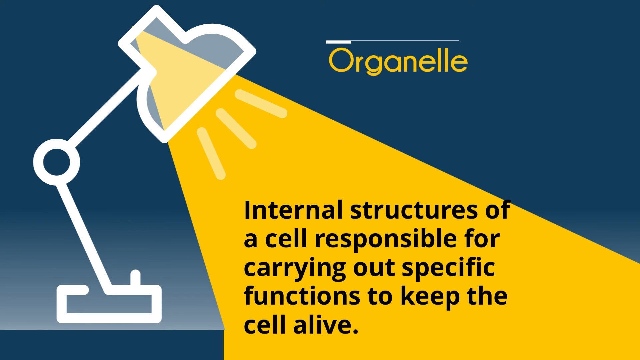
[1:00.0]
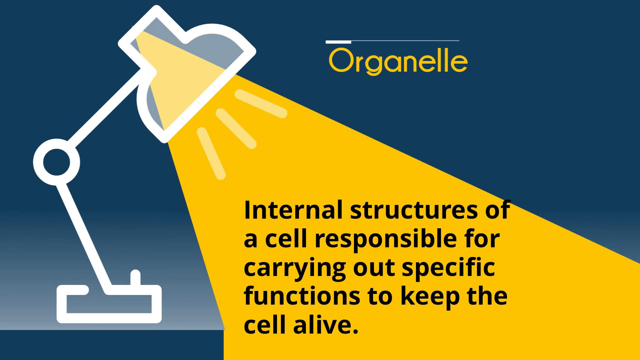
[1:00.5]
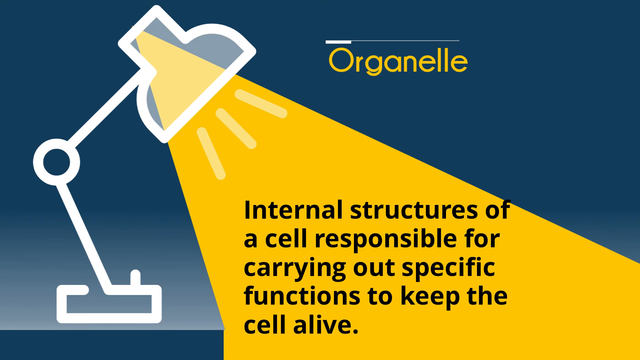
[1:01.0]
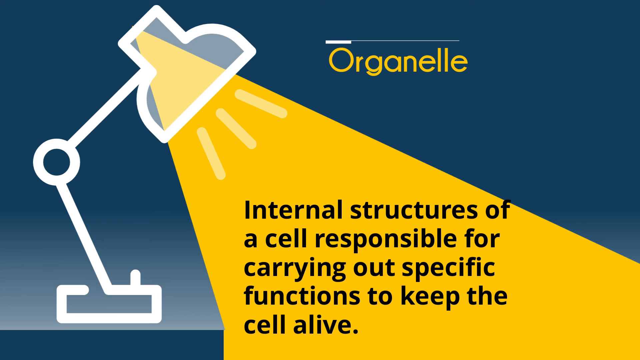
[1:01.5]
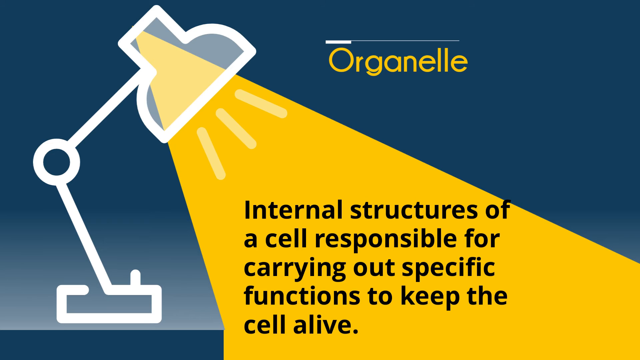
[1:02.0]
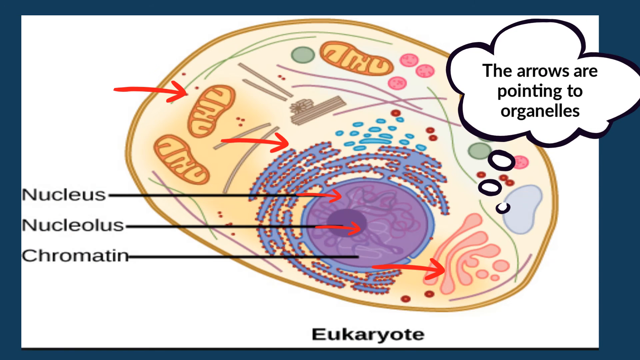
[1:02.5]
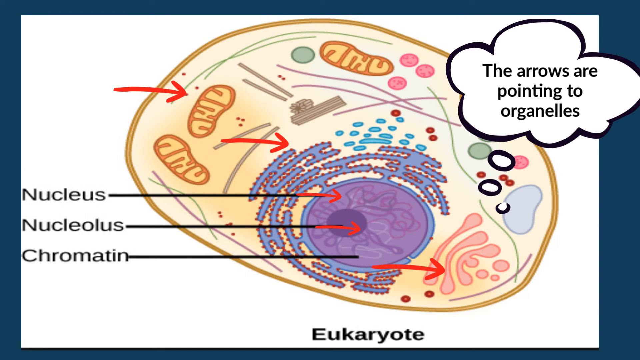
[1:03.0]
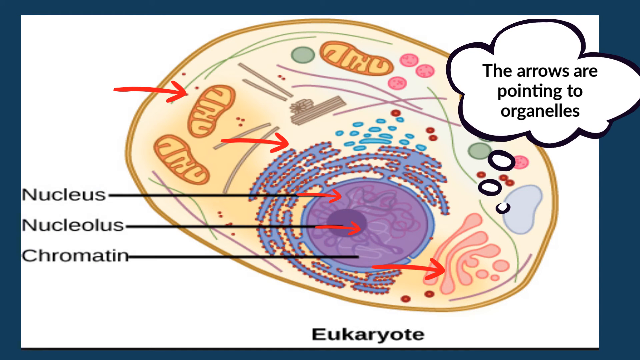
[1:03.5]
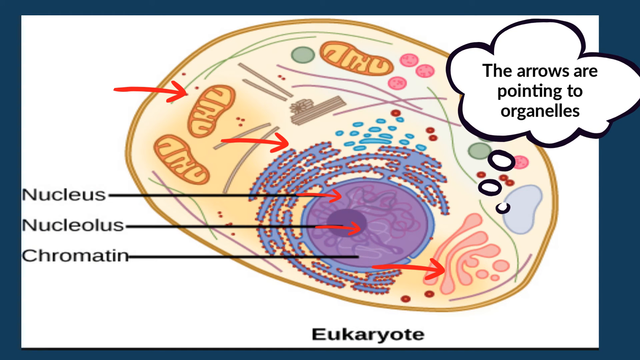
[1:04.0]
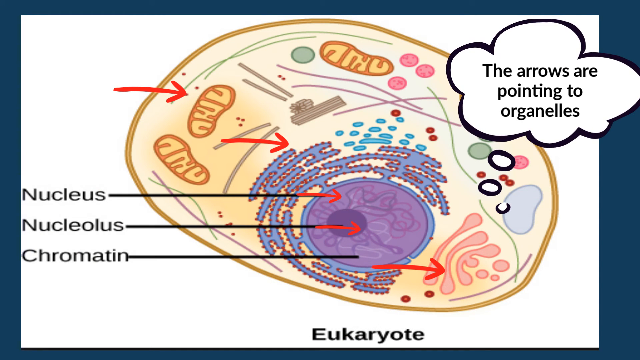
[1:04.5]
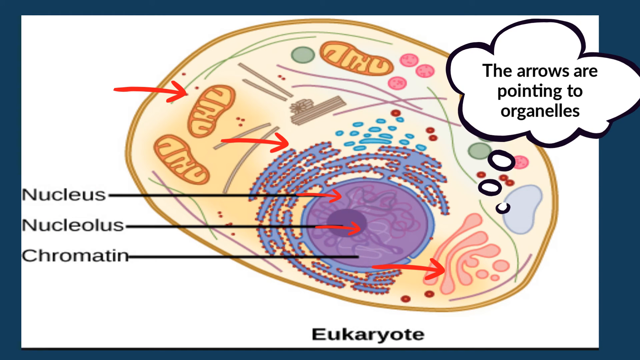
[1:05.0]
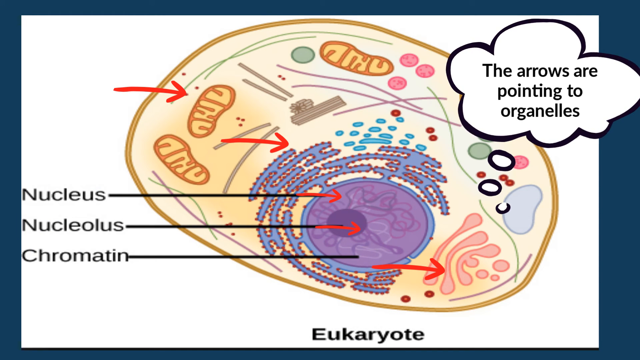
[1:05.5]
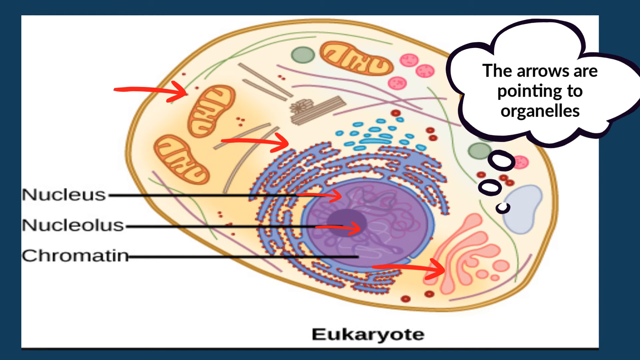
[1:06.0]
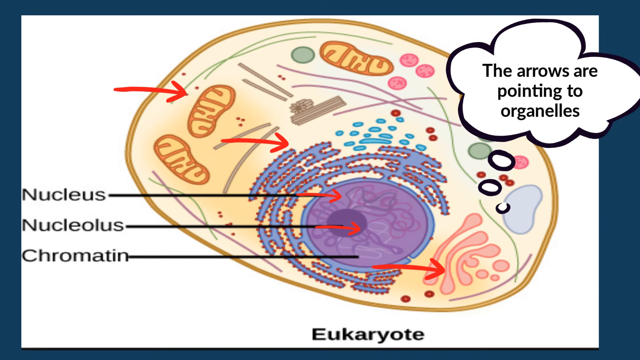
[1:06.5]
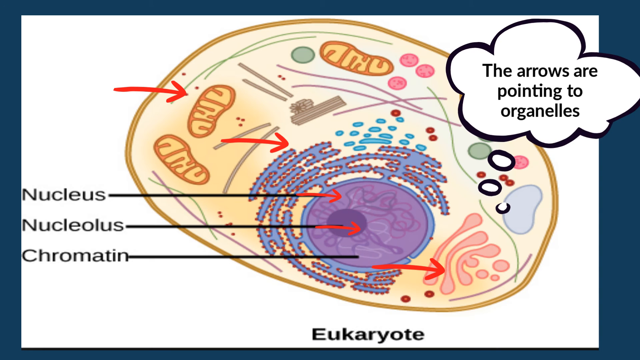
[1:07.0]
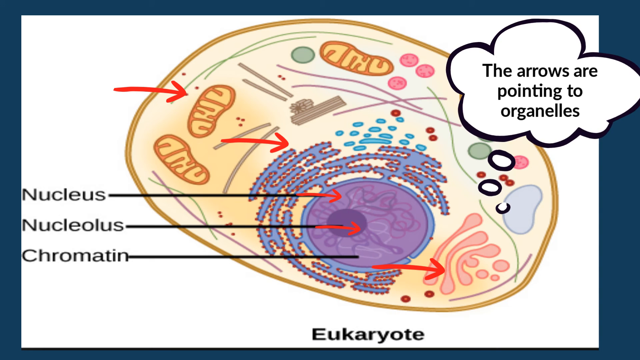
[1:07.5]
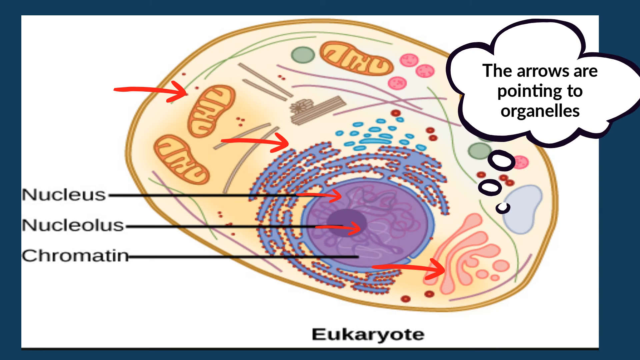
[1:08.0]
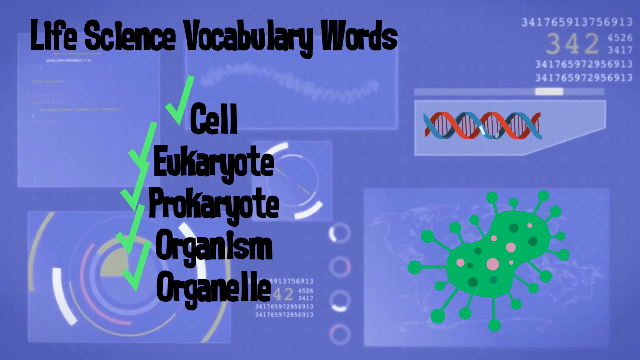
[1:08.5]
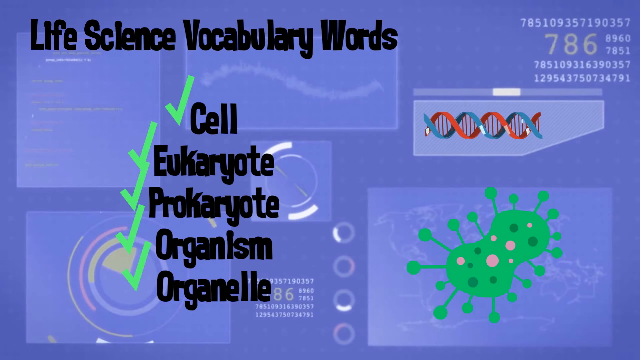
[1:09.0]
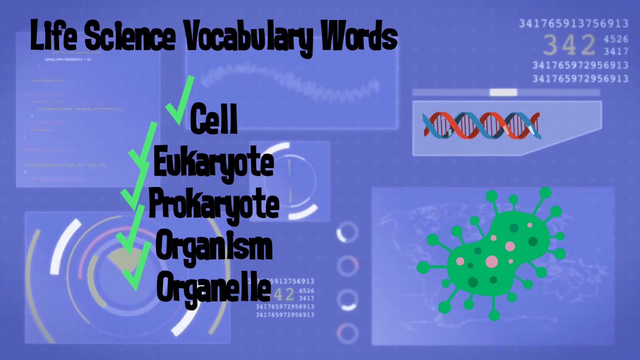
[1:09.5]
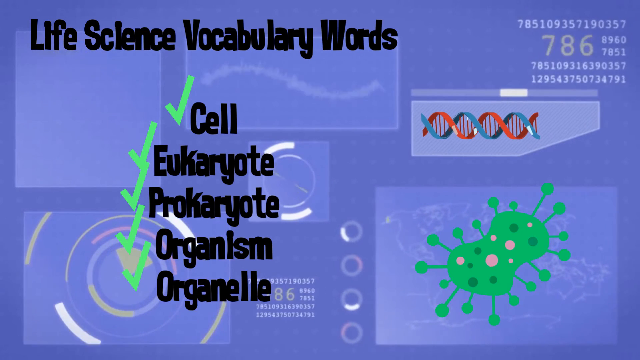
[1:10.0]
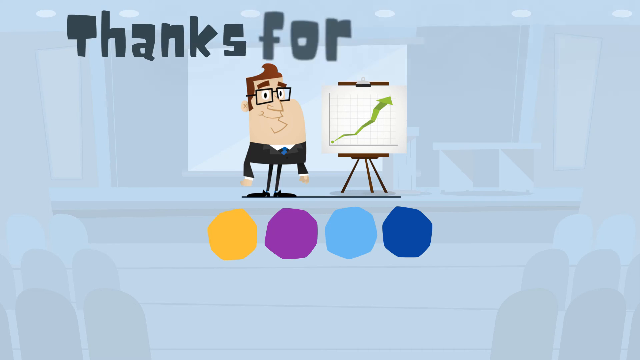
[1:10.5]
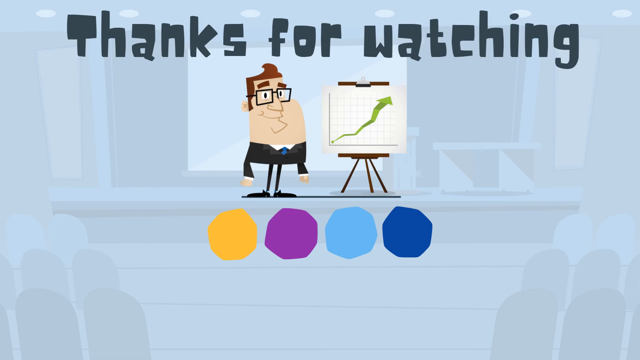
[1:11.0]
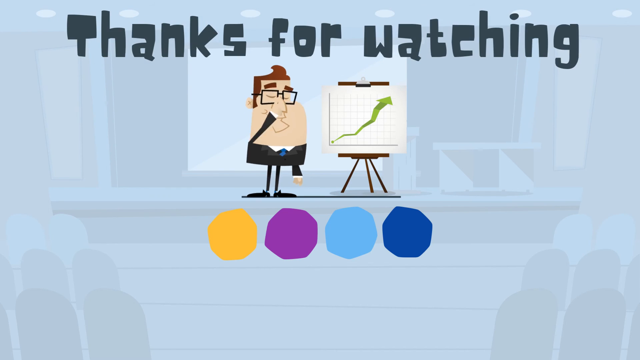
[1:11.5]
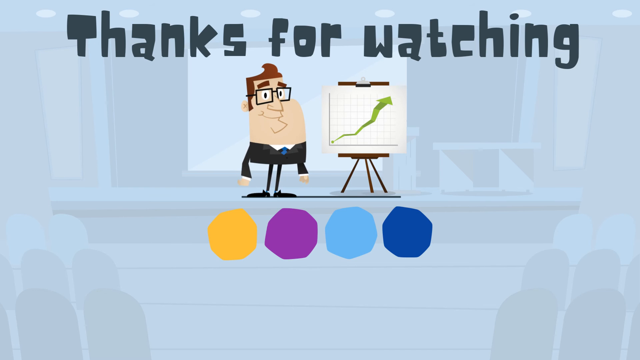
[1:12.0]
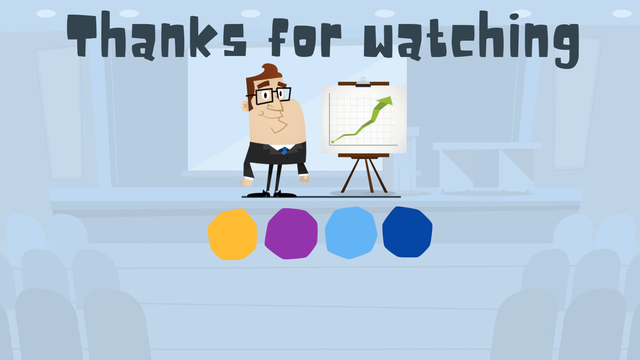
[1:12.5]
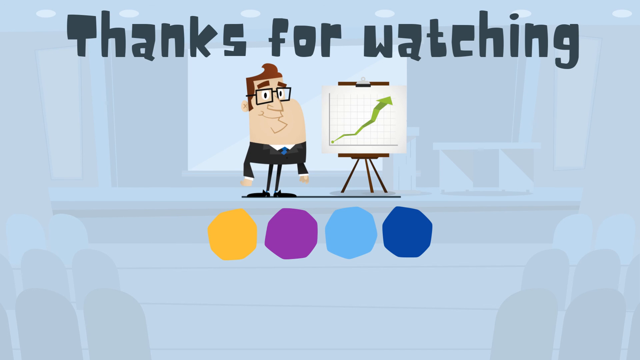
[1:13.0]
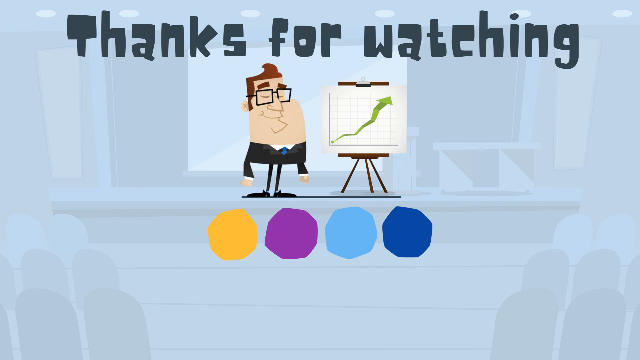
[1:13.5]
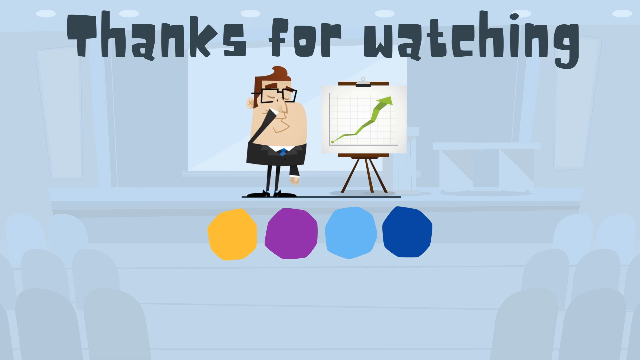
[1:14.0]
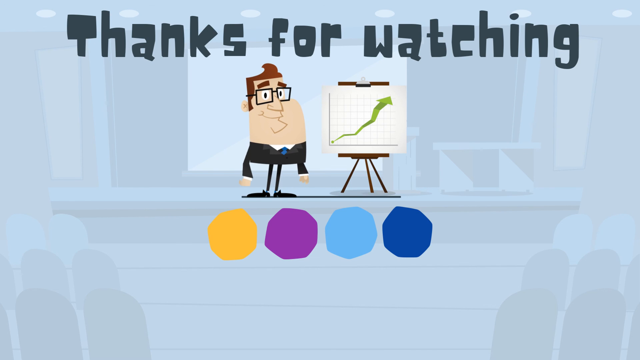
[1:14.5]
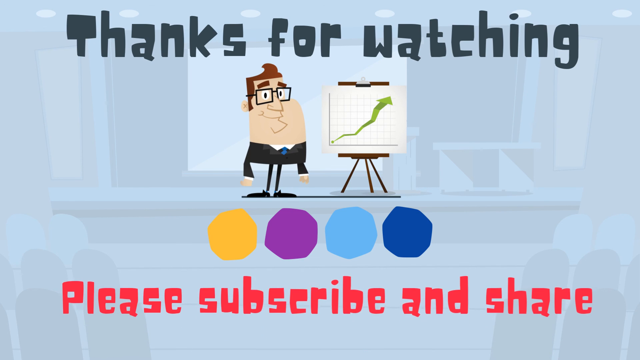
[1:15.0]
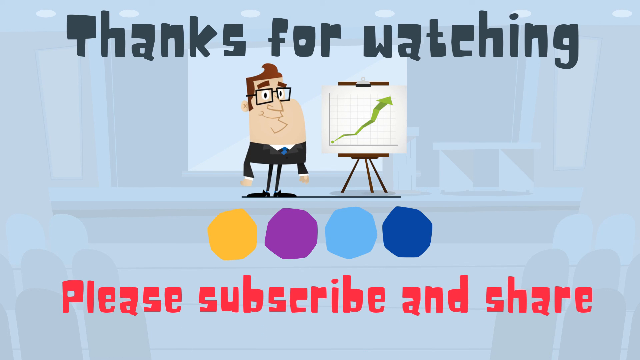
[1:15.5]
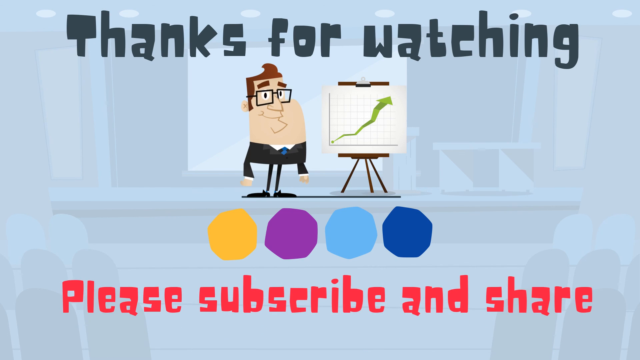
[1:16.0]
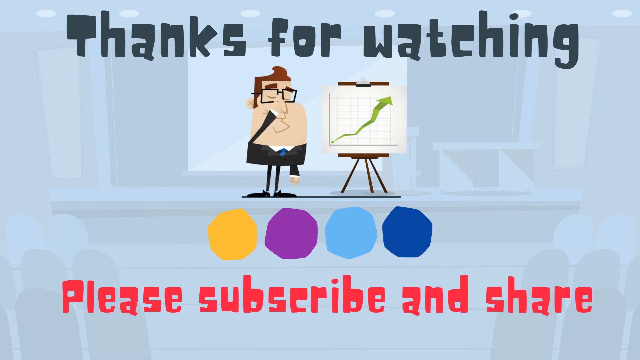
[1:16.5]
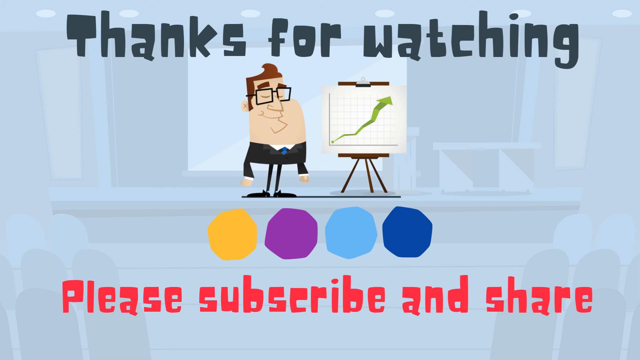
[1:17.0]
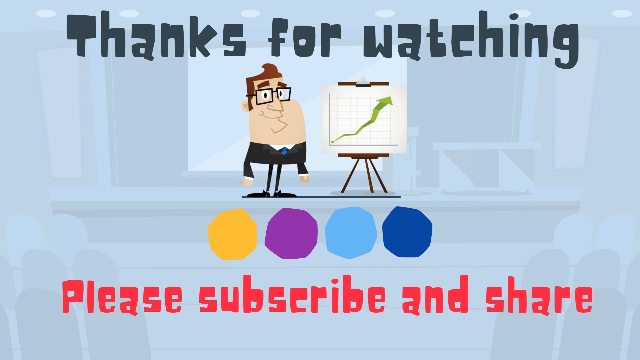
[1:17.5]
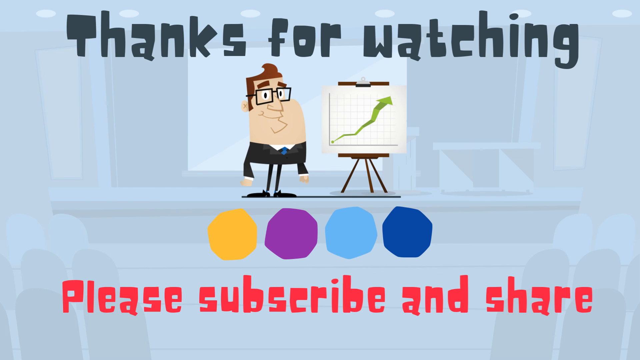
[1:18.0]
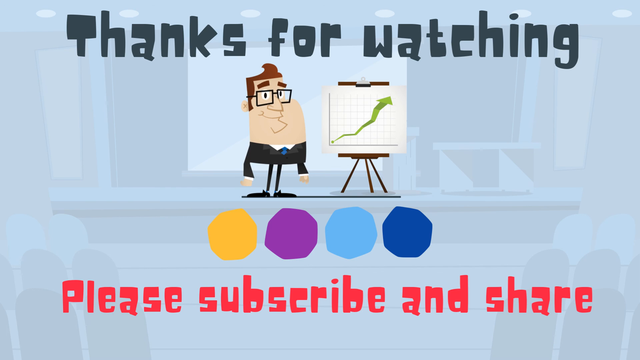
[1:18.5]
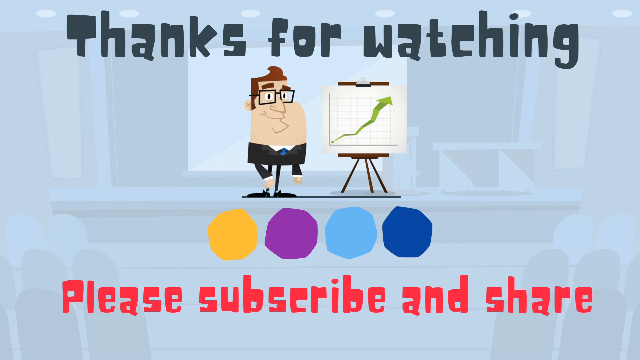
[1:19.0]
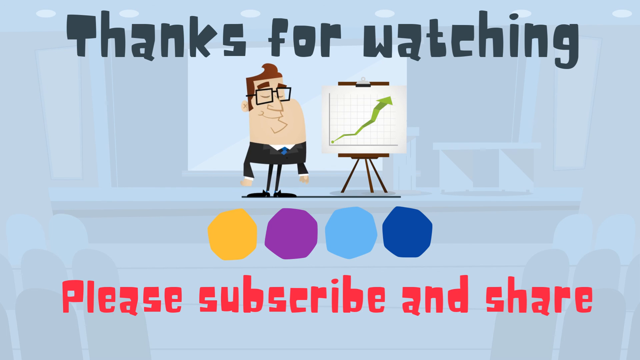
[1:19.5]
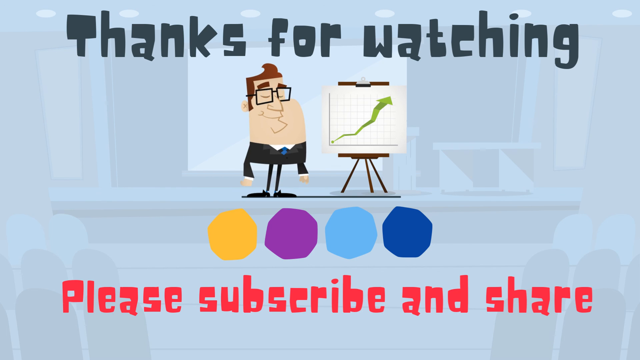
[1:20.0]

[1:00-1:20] The same definition for organelle is shown, followed by a visual diagram for it, the same image used earlier for the prokaryote, but now with red arrows pointing to different parts of it. A speech bubble at the top right says "the arrows are pointing to organelles," such as apparently the Golgi apparatus. A checklist of all the vocabulary words then appears. At the end, "thanks for watching" is at the top of the screen and "please subscribe and share" is at the bottom.